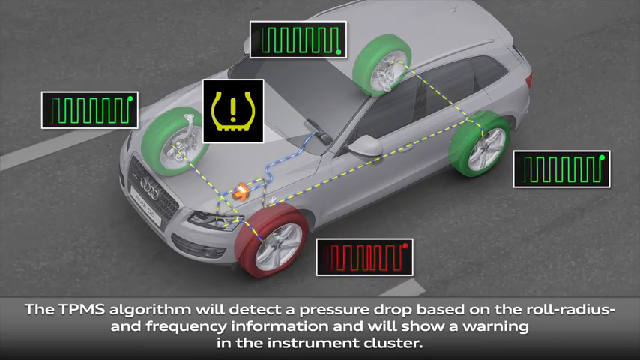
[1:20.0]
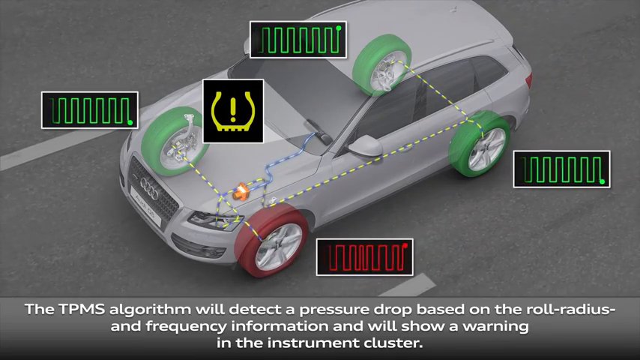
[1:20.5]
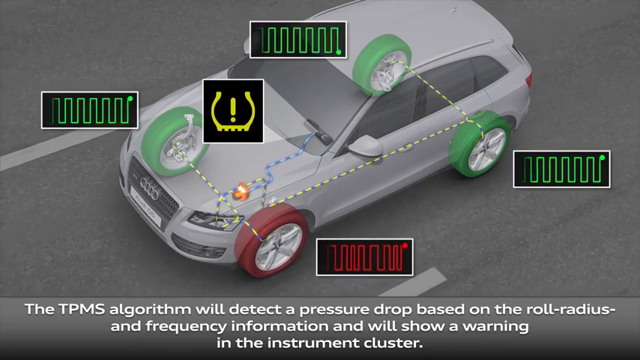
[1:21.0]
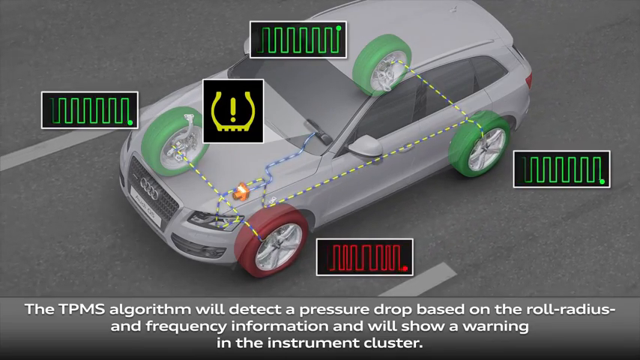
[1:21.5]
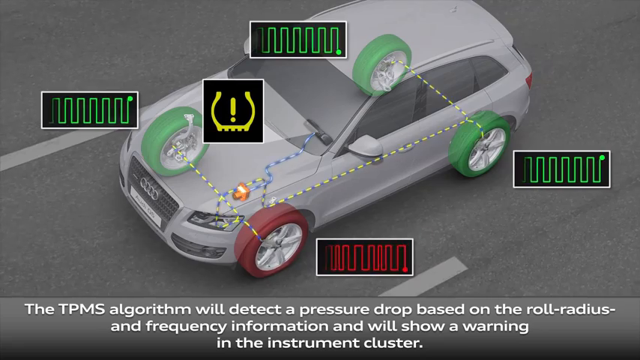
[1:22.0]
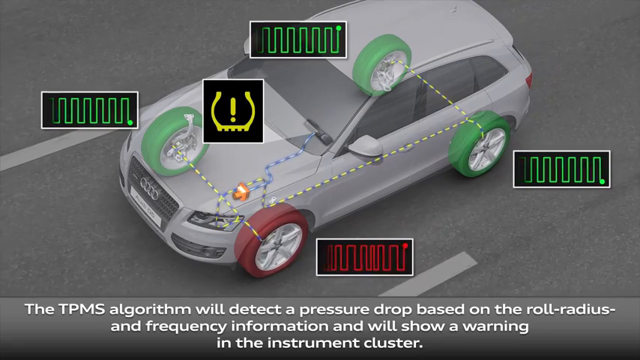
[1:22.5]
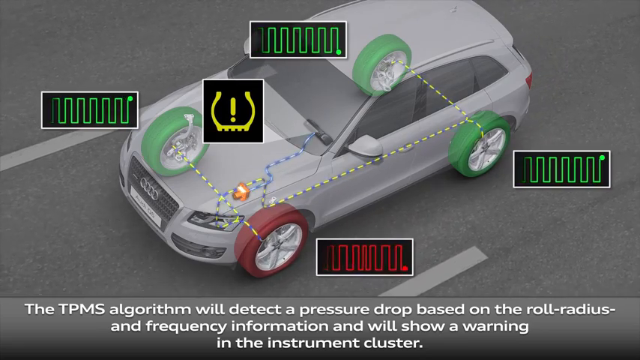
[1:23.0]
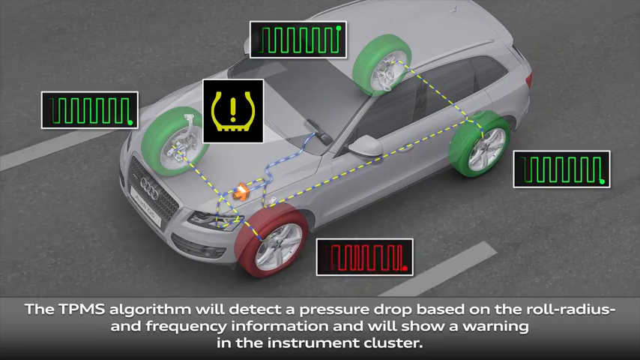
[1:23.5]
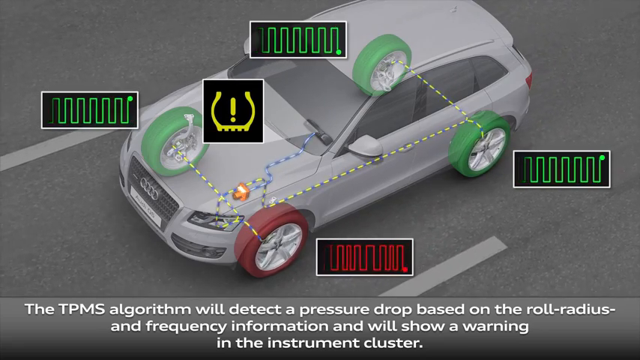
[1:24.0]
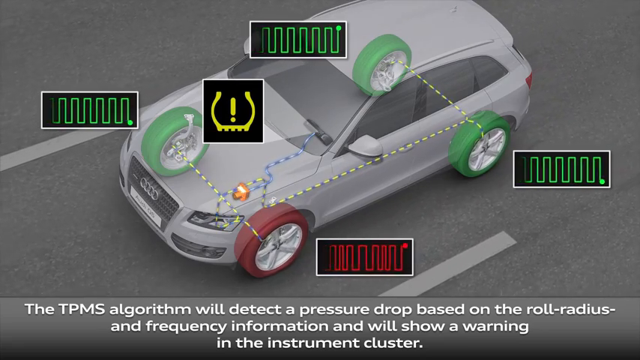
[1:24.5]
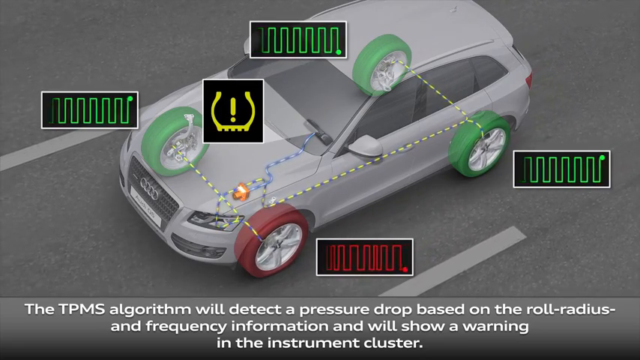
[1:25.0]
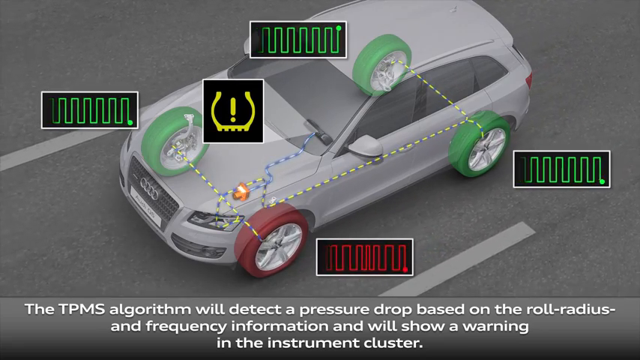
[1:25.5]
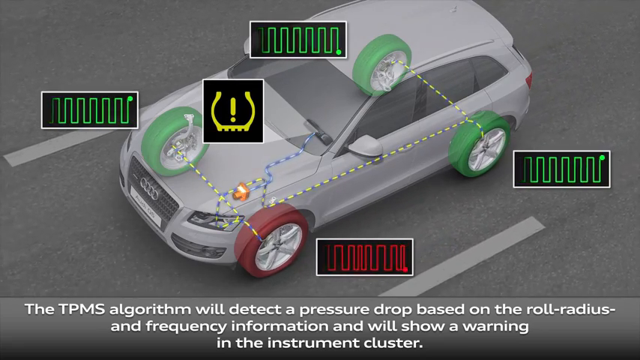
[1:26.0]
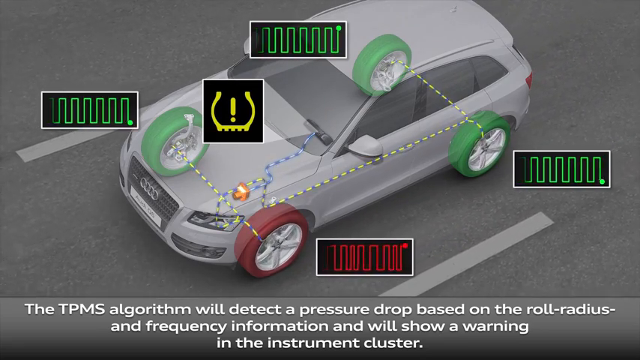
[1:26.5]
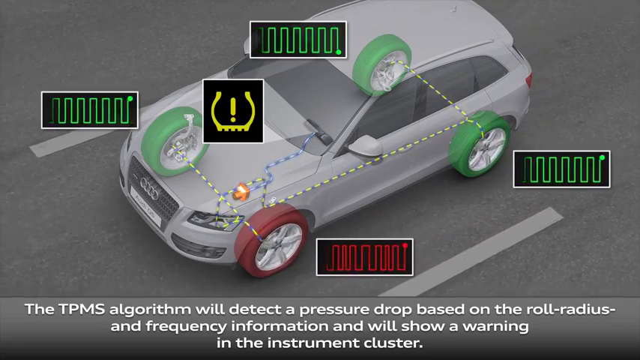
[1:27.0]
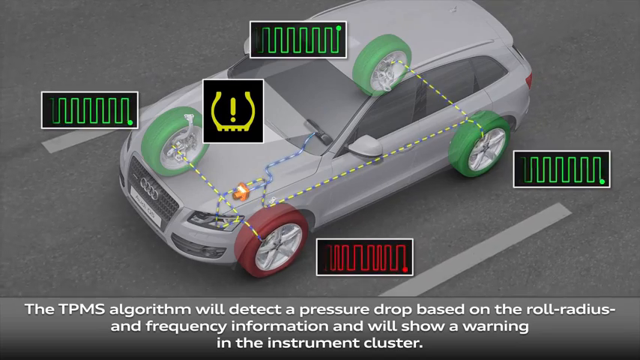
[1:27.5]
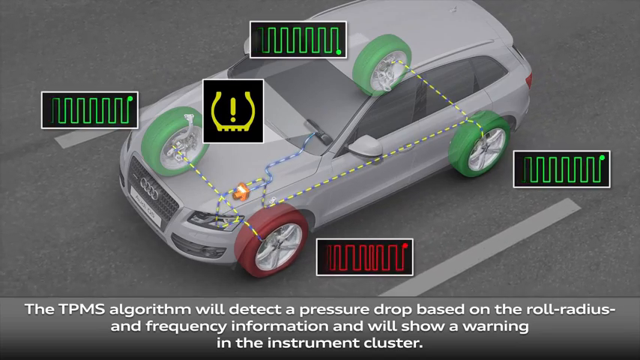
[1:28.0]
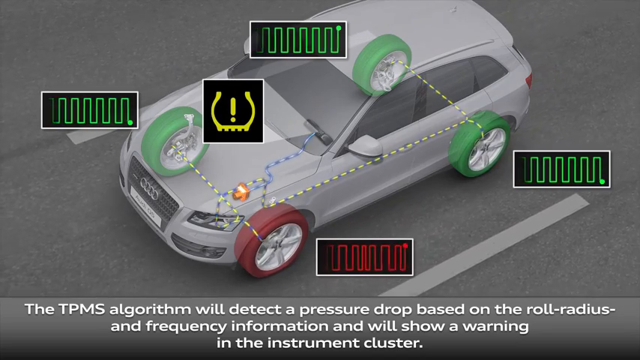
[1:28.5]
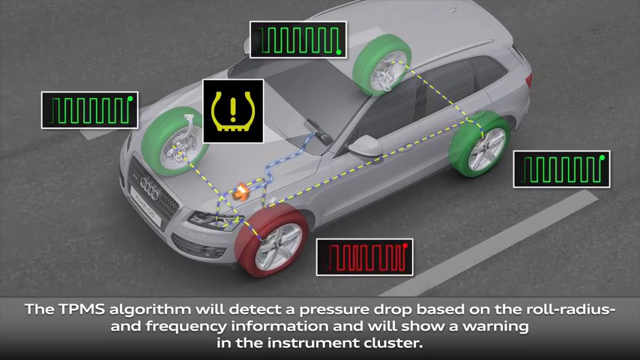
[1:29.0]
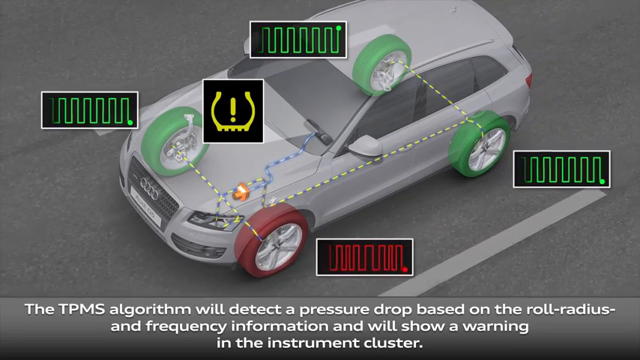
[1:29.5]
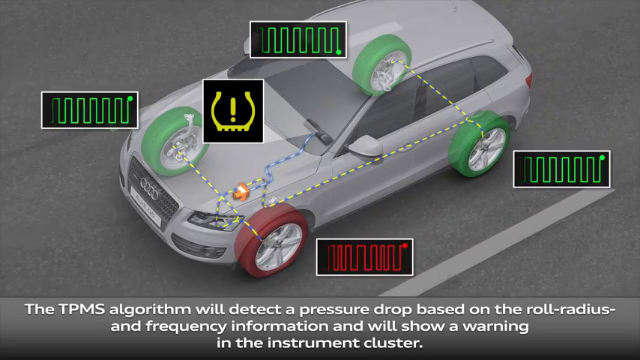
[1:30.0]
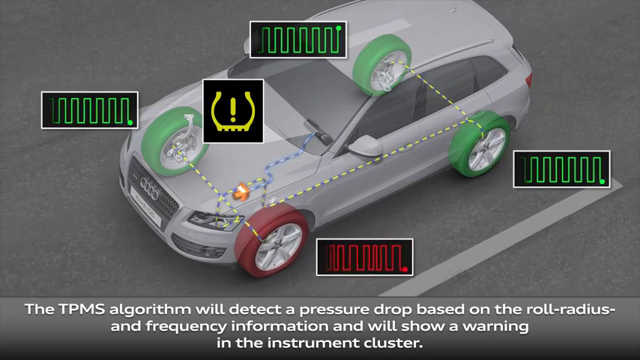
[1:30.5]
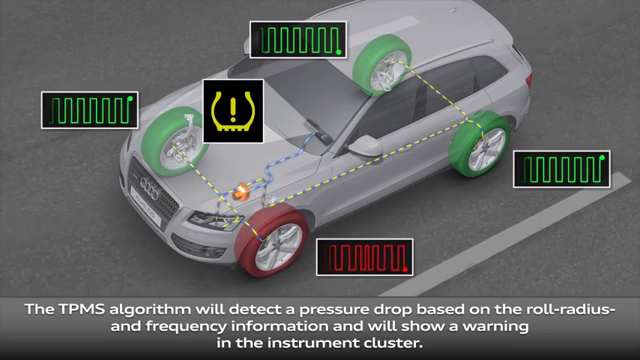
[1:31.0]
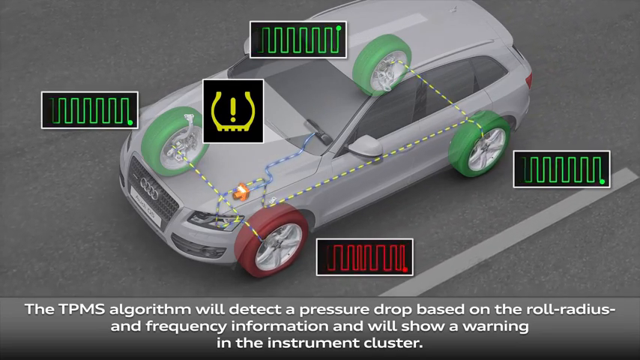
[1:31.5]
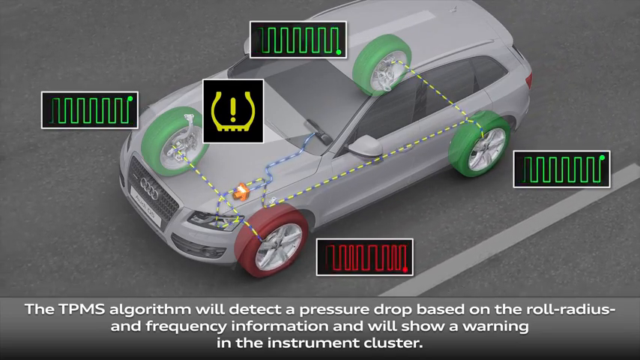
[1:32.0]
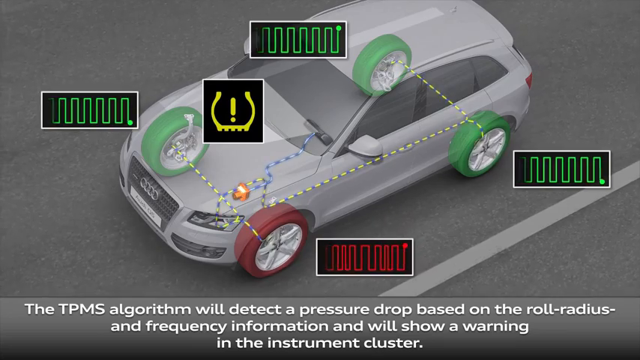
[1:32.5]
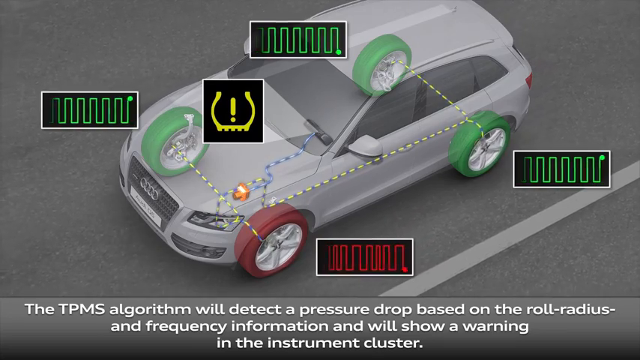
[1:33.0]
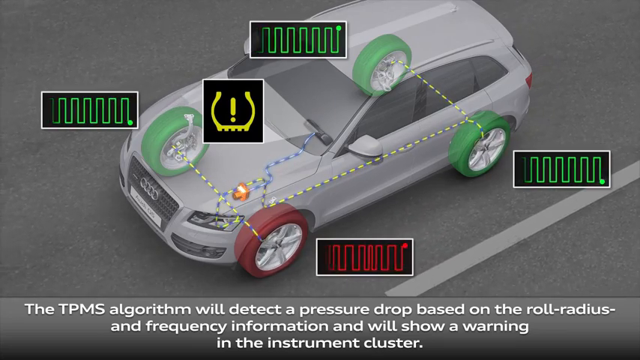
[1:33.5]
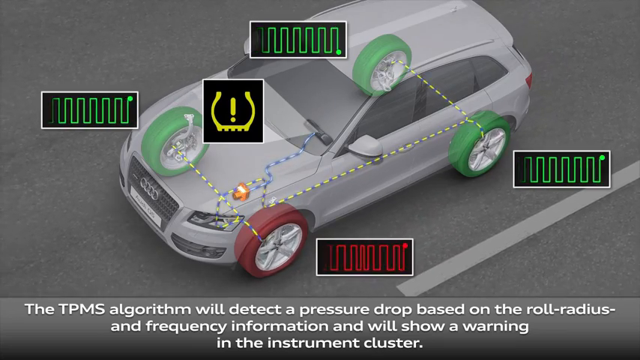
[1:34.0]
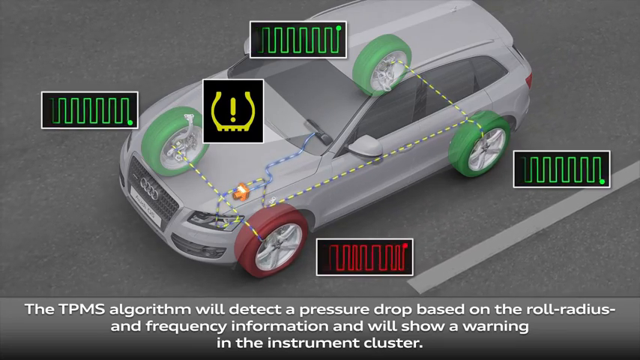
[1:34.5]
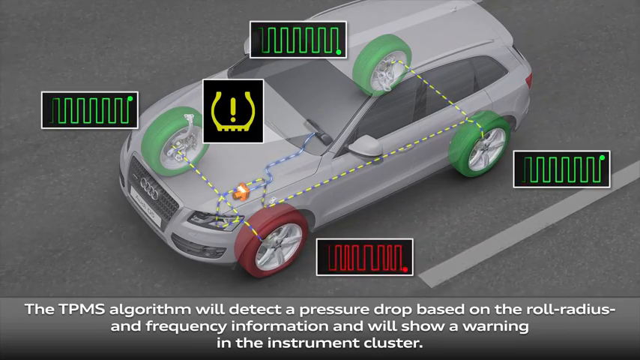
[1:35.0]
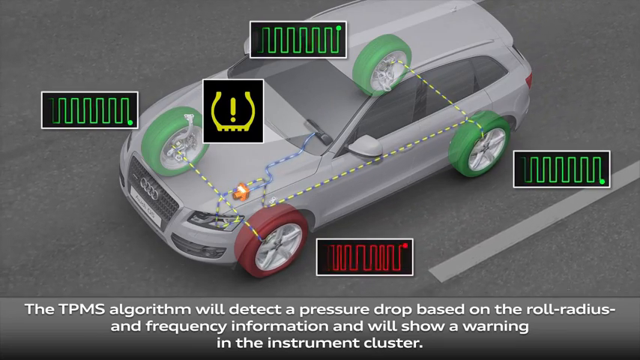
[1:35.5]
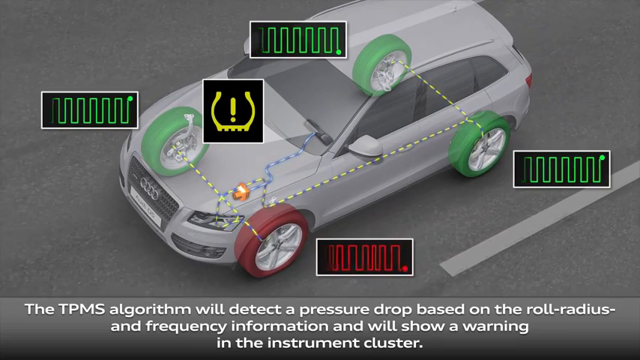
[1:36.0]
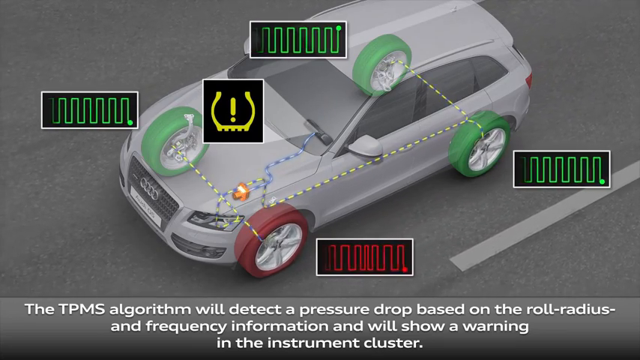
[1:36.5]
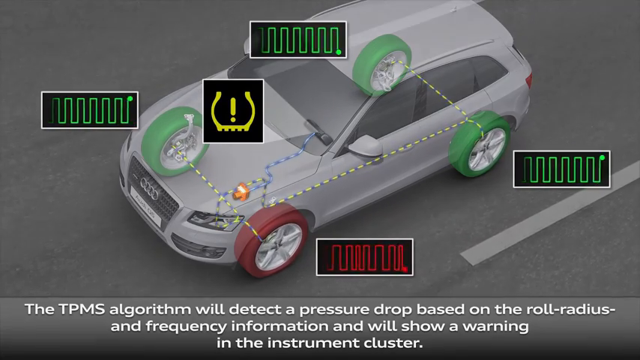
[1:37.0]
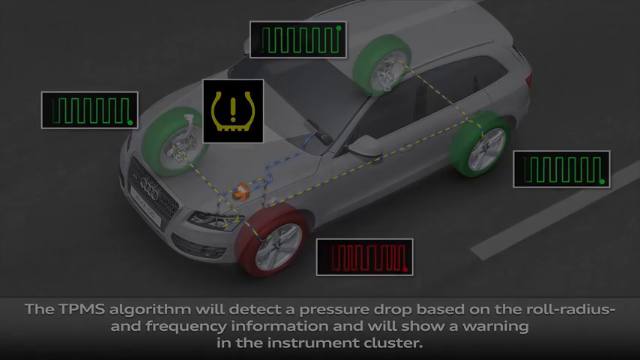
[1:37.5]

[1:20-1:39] The four indicators representing the vehicle's four tires remain on screen. The bottom indicator represents the front tire on the driver's side; the tire is still red, and its indicator is red as well. The warning sign, a yellow exclamation point, is still visible; it looks to be in some sort of container that looks almost like a horseshoe. The see-through, very transparent car continues to show one red tire and three green tires, along with how the tires are connected: the front tires to each other, the back tires to each other, and the driver's side tires on the left. They are connected through the yellow and blue tube running through the vehicle, and the yellow and blue colors of the tube move, circulating.